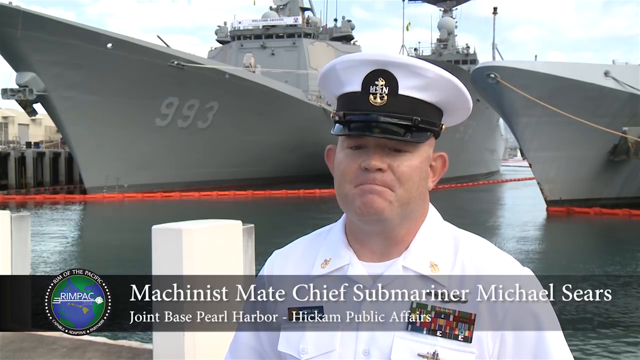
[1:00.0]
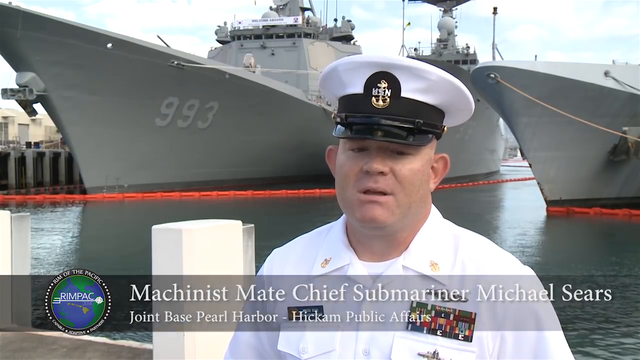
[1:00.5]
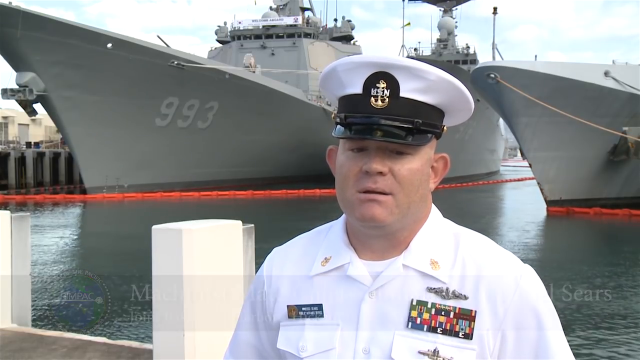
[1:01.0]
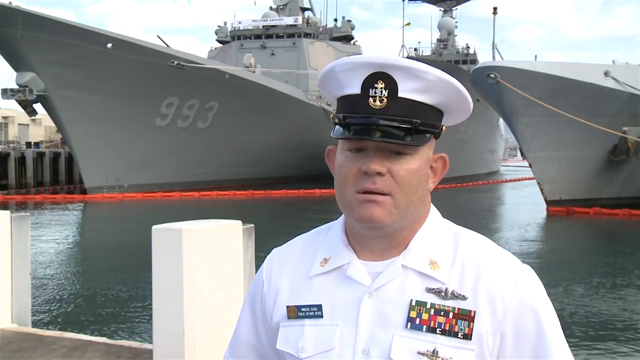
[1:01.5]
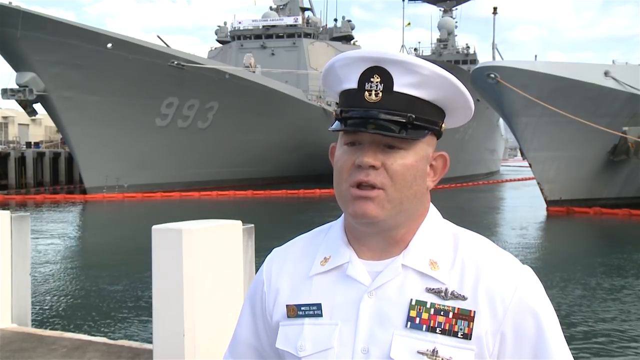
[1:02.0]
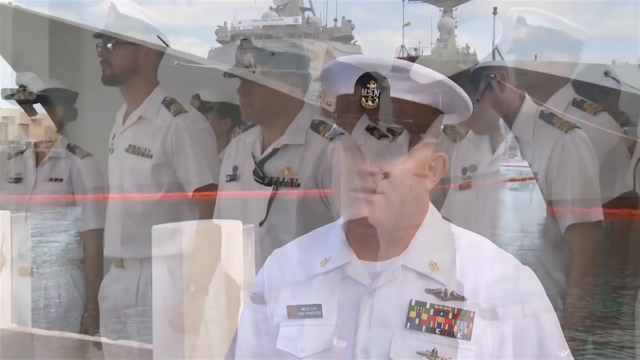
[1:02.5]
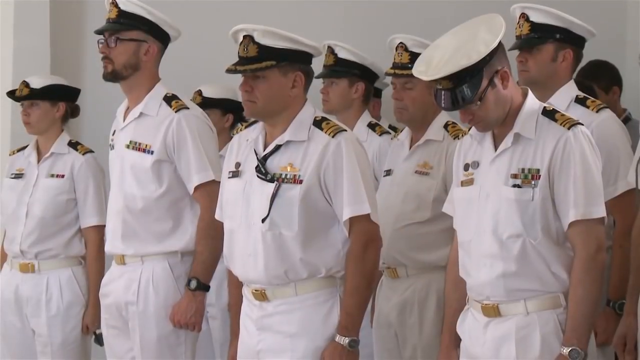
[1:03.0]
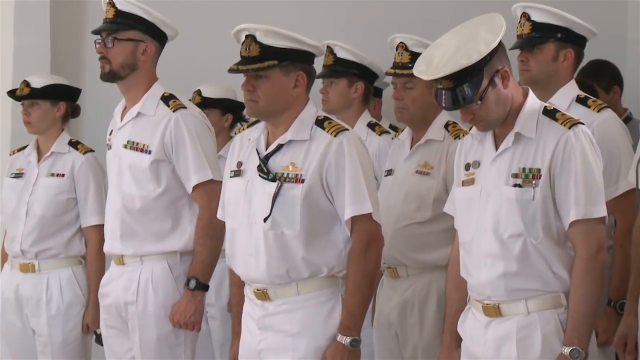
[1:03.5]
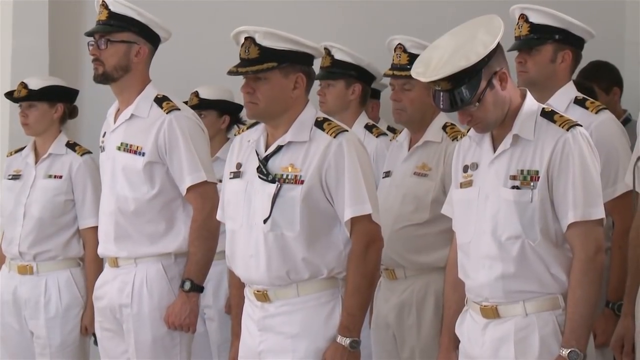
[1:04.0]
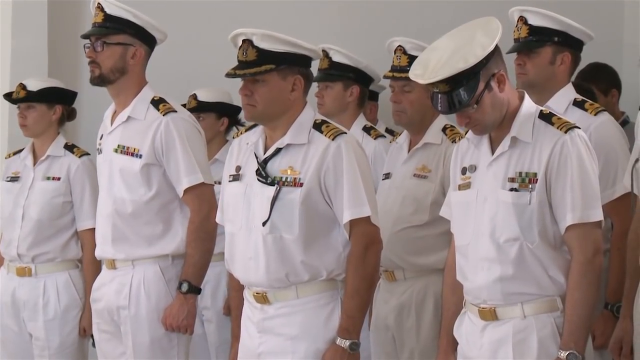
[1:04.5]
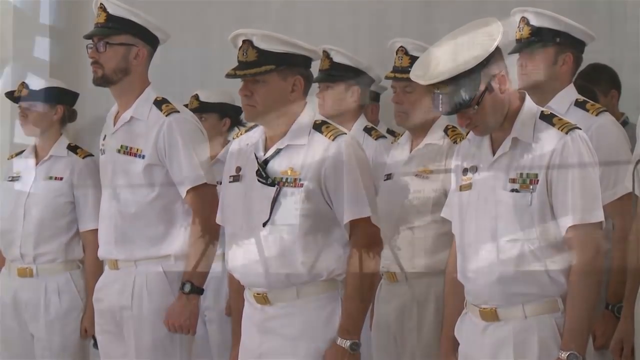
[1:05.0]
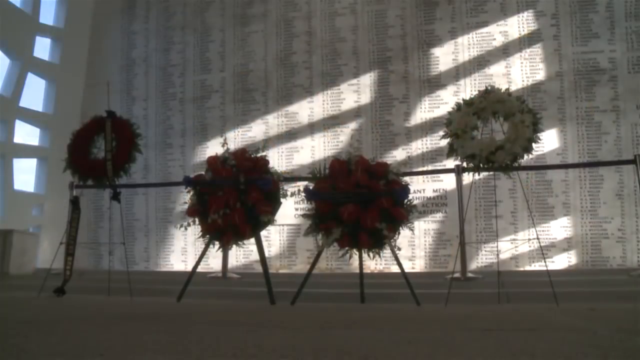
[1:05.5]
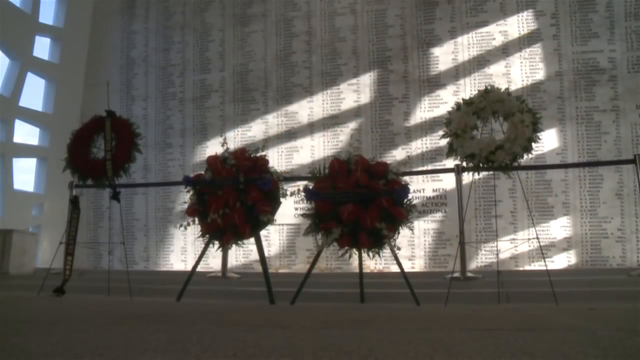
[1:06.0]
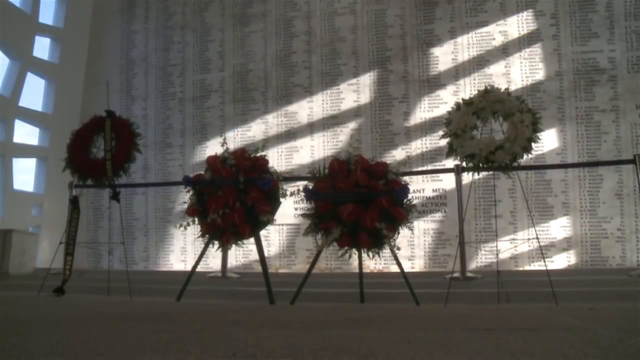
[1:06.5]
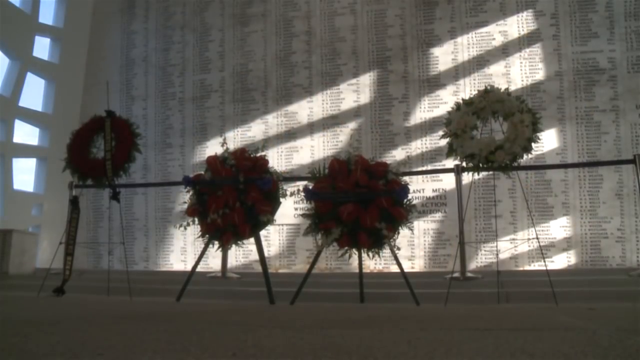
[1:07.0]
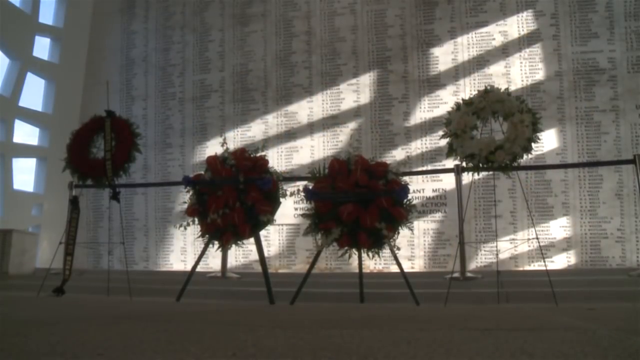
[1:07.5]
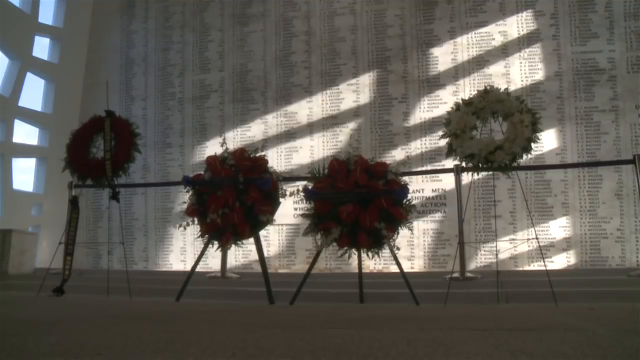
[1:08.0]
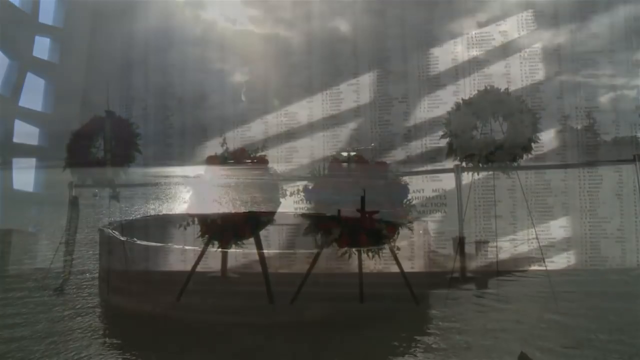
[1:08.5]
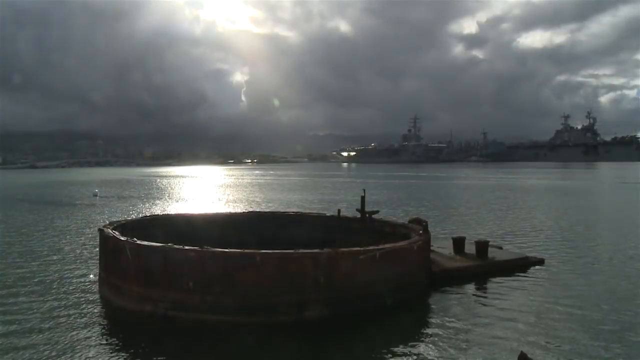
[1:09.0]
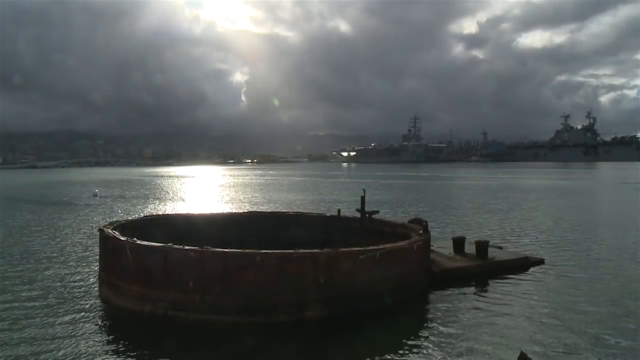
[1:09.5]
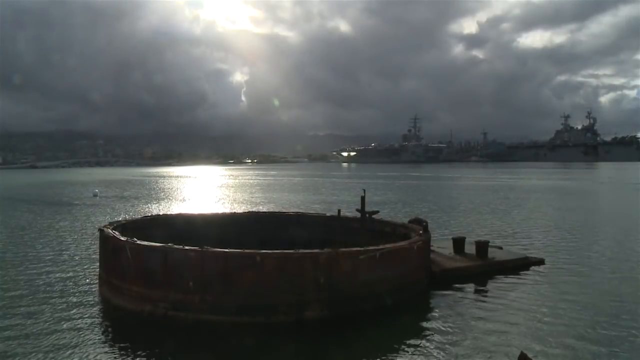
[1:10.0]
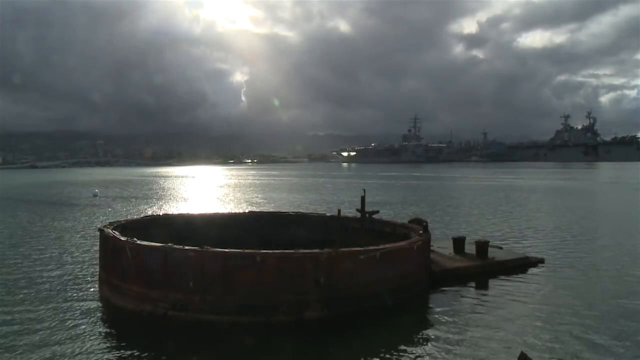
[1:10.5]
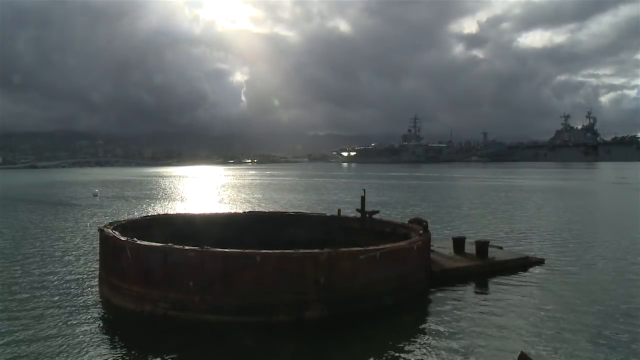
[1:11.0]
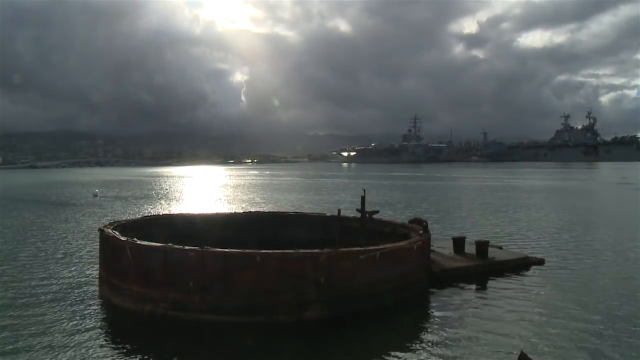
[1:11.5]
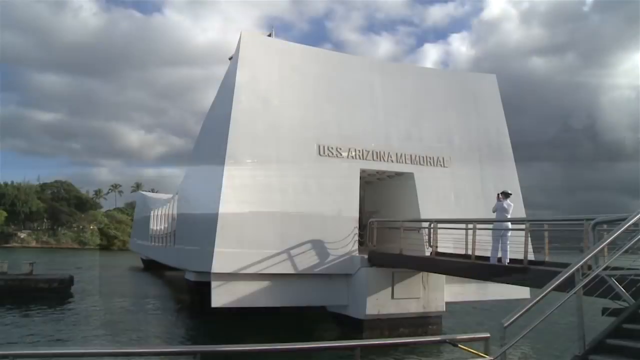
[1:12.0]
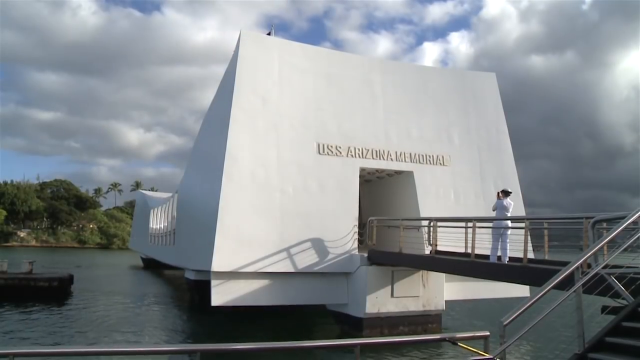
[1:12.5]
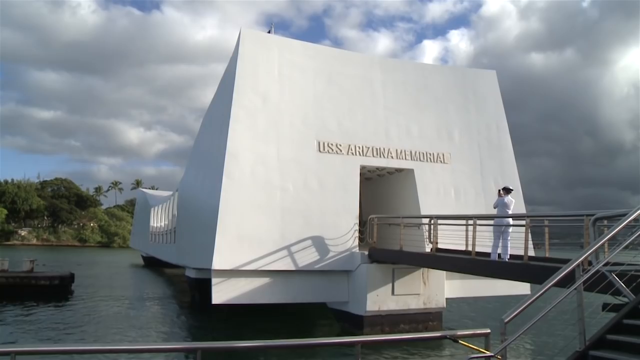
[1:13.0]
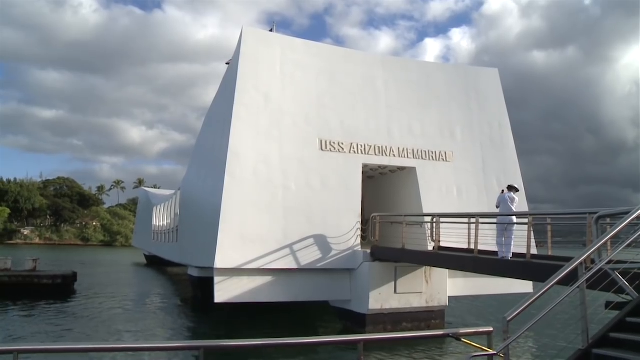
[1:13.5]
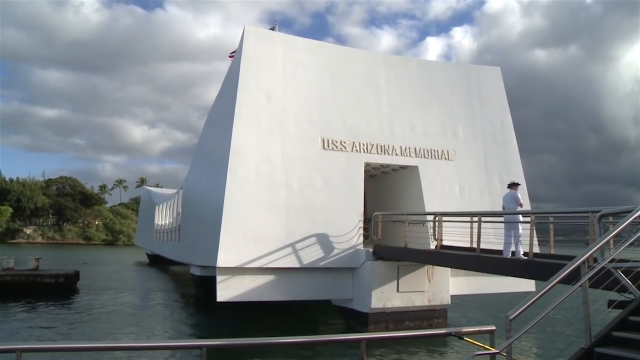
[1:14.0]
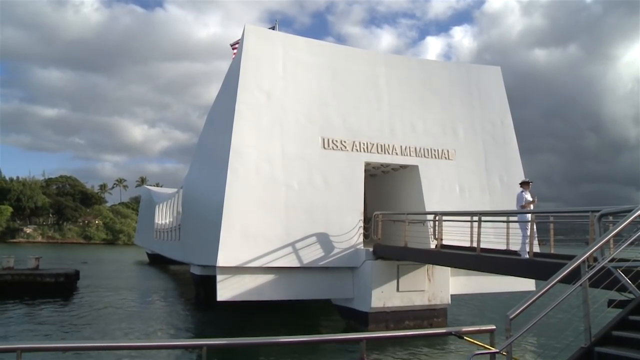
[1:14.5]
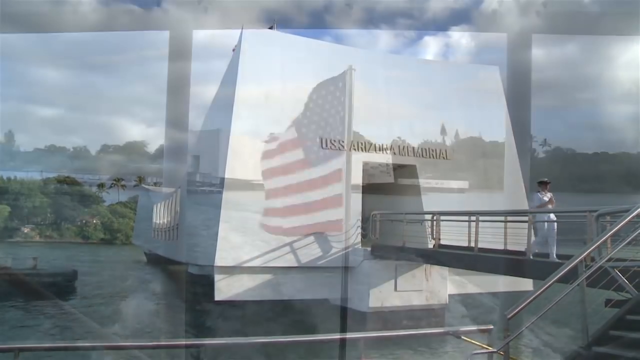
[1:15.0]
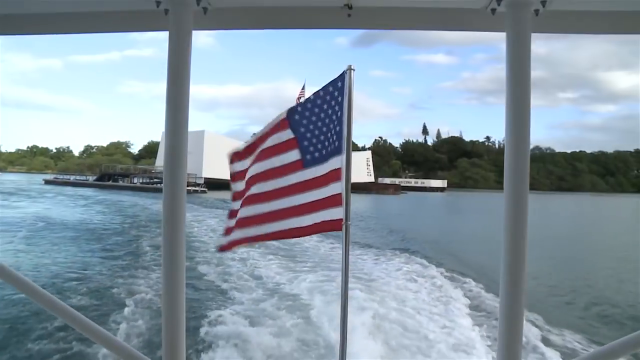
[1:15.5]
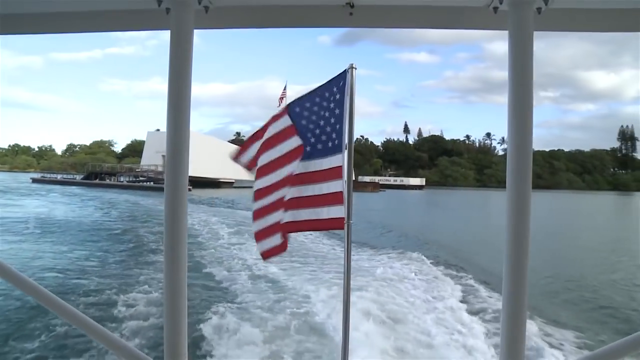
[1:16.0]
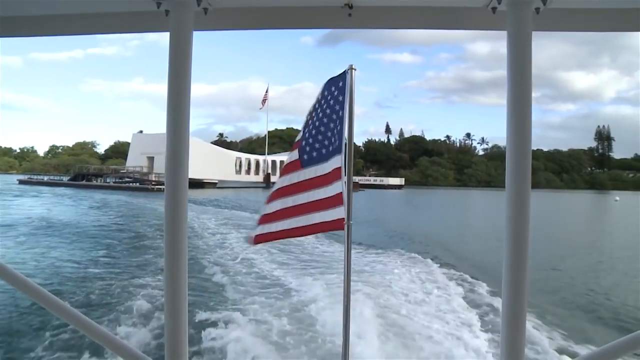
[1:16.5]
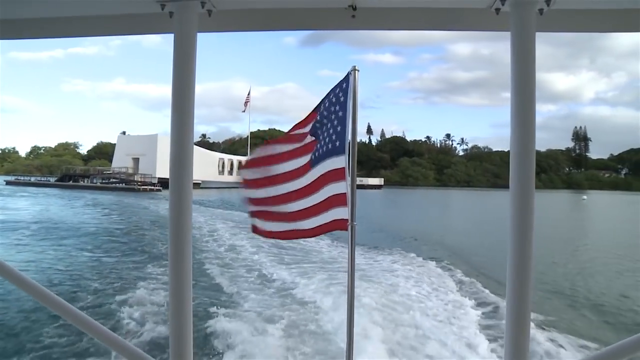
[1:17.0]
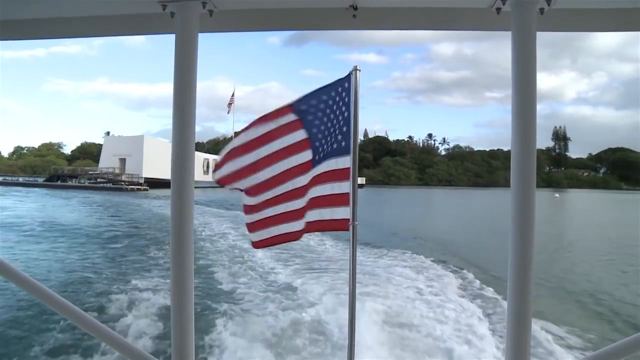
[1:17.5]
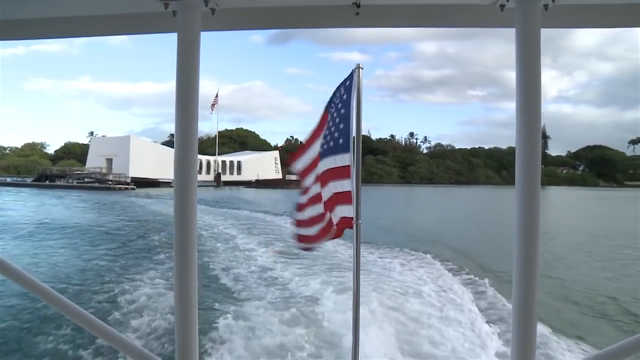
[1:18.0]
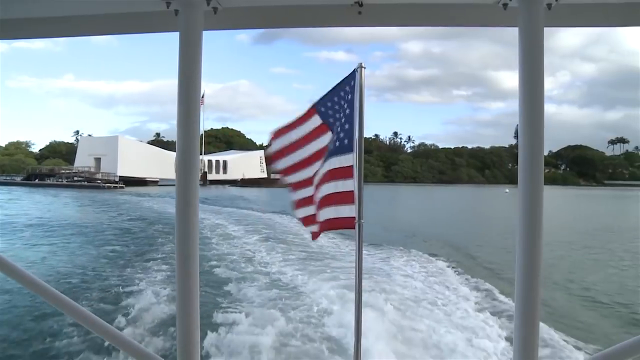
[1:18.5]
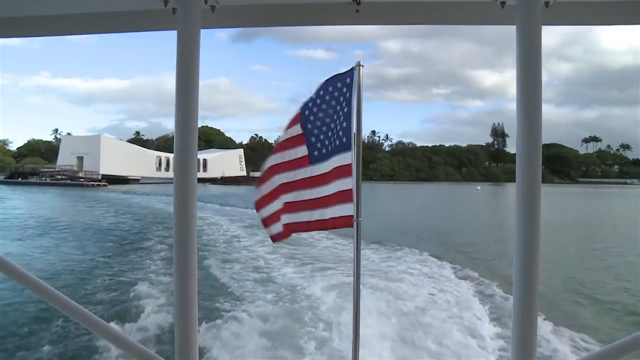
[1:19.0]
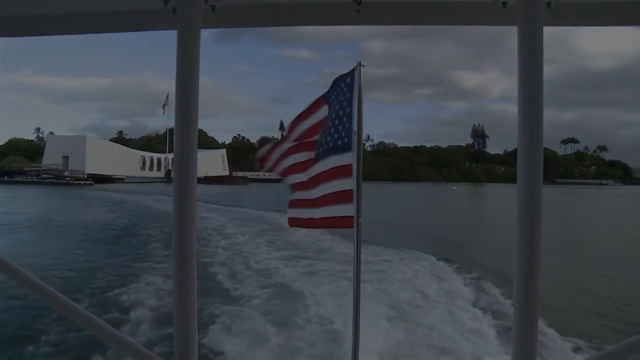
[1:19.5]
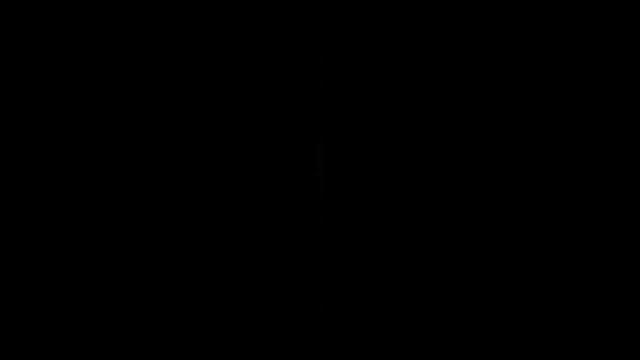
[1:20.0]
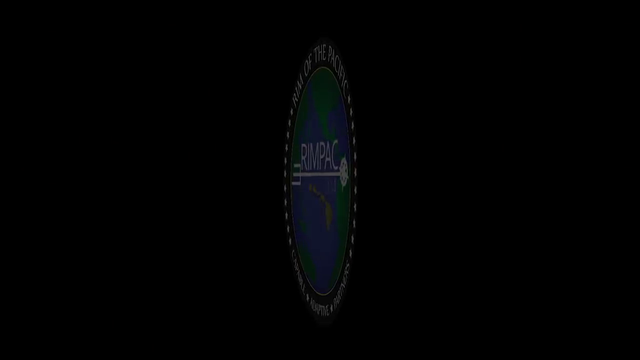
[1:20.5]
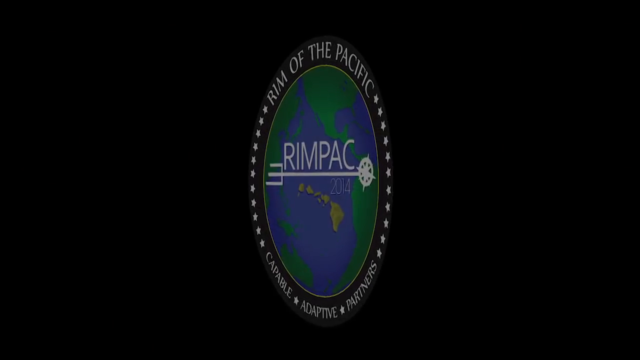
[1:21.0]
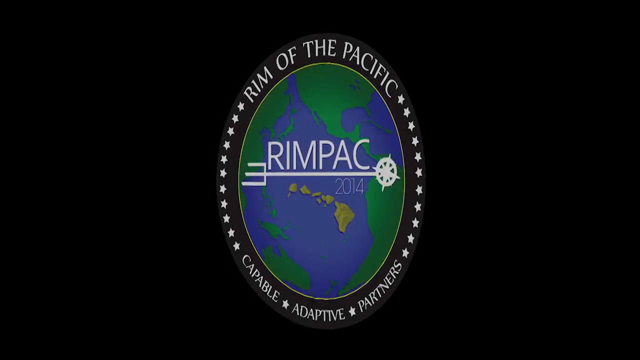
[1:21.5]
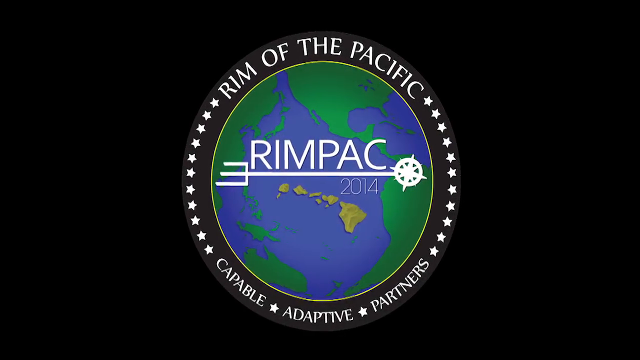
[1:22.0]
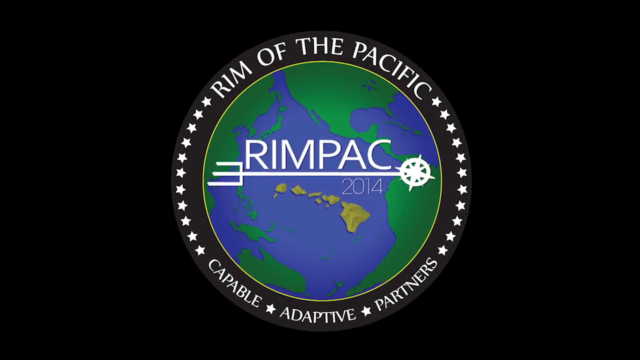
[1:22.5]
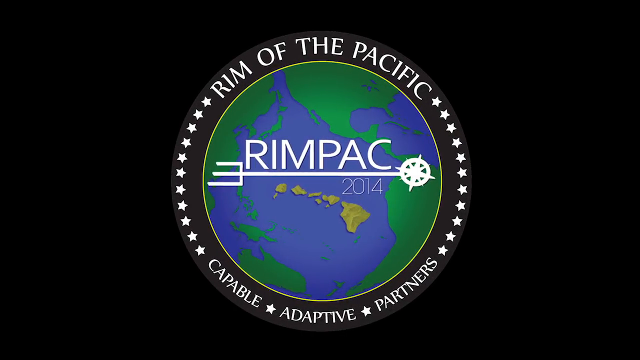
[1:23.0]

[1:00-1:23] The lower-ranking serviceman speaks briefly before the camera switches to the group of men and women, all in the uniforms with the black-and-white hats and various medals. They stand very still; some have their heads bowed while others look on peacefully. The wreaths at the memorial are shown once again. Images of the area and the land follow, with text reading "U.S. Arizona Memorial". A boat carries them away from the memorial, moving away in the frame, with an American flag at the very back waving in the wind.